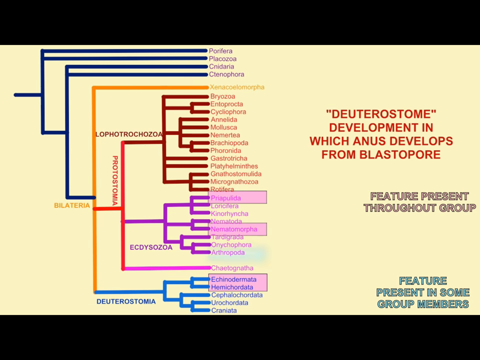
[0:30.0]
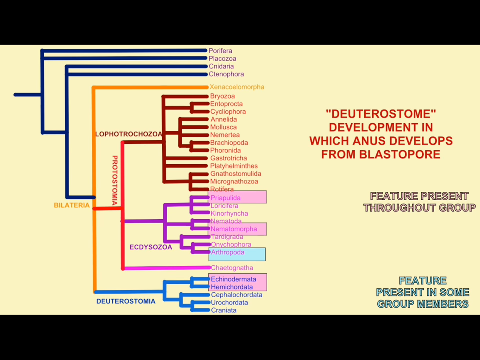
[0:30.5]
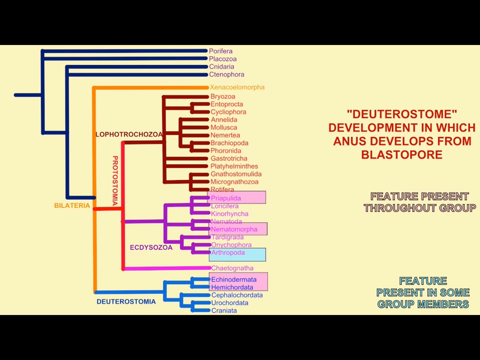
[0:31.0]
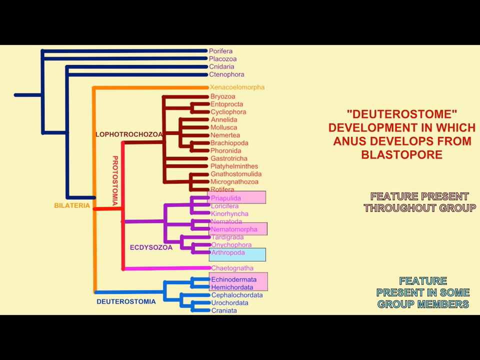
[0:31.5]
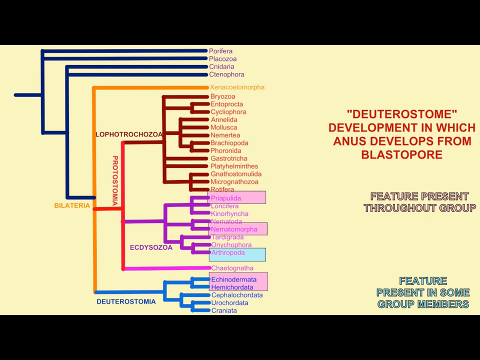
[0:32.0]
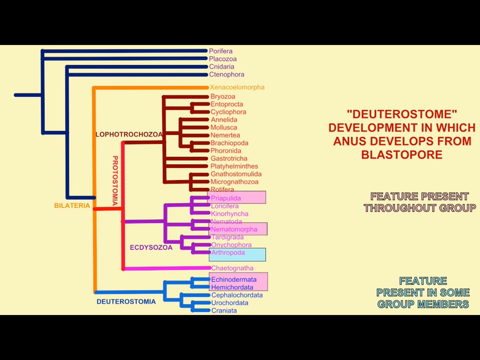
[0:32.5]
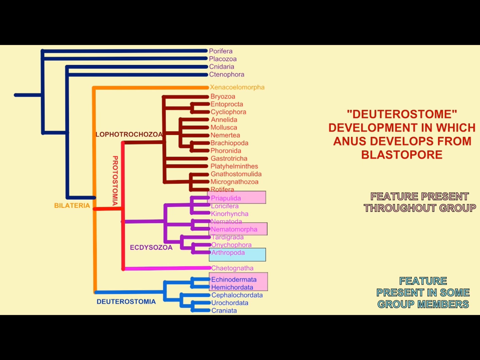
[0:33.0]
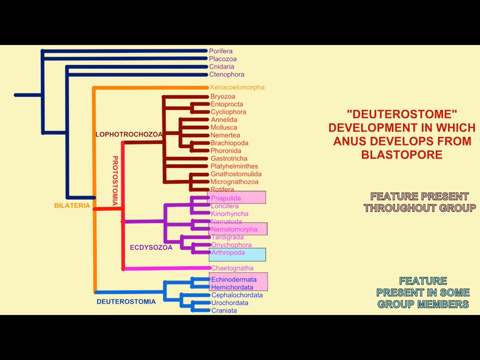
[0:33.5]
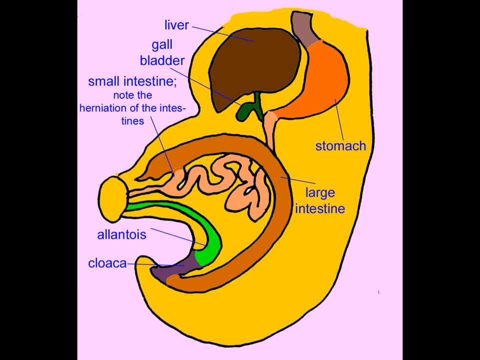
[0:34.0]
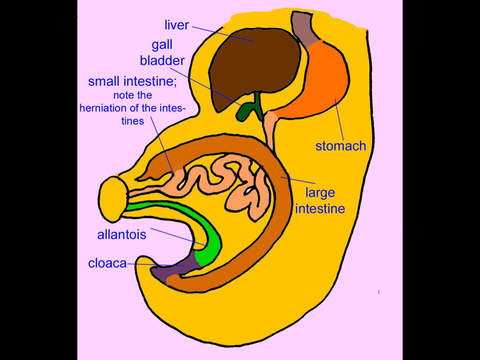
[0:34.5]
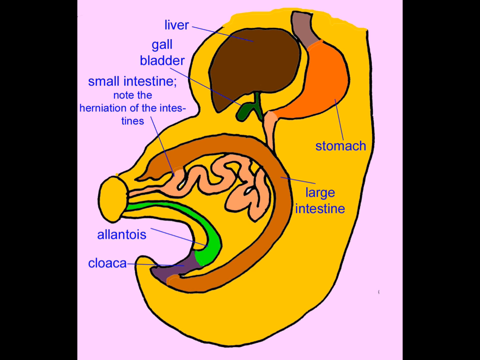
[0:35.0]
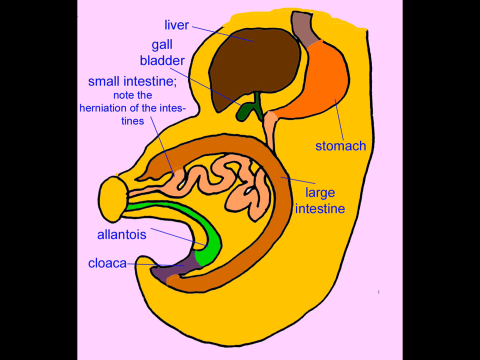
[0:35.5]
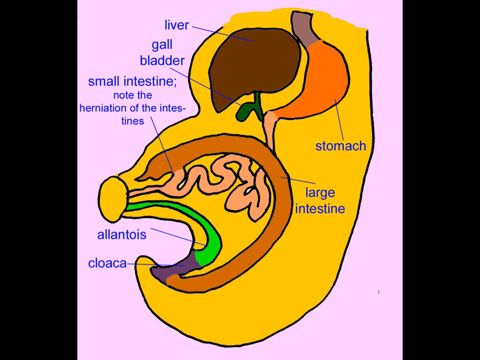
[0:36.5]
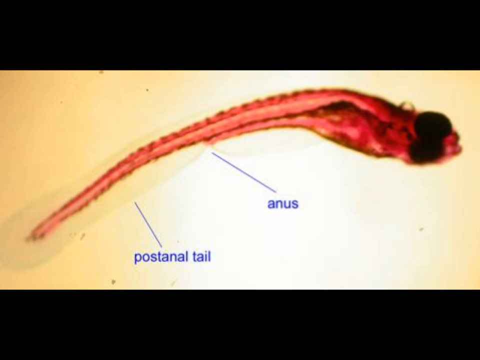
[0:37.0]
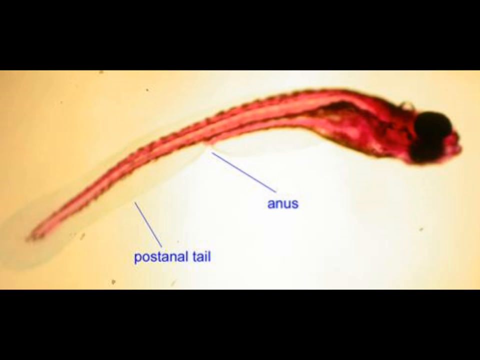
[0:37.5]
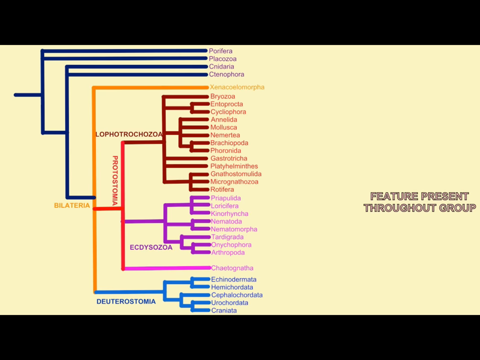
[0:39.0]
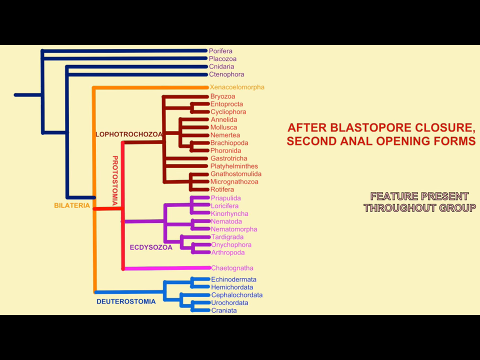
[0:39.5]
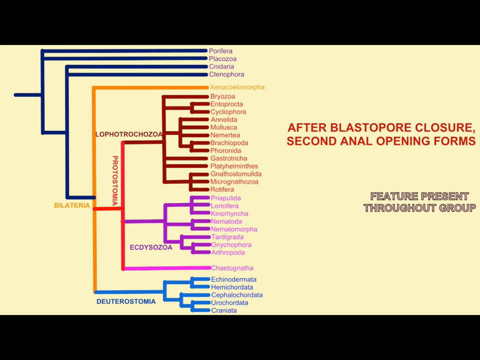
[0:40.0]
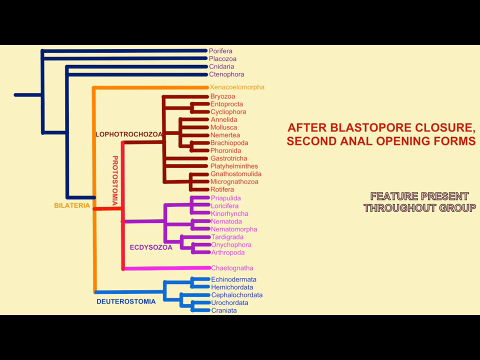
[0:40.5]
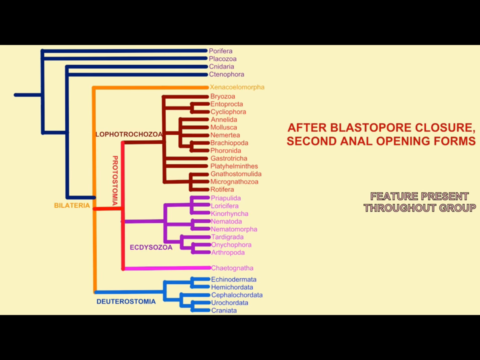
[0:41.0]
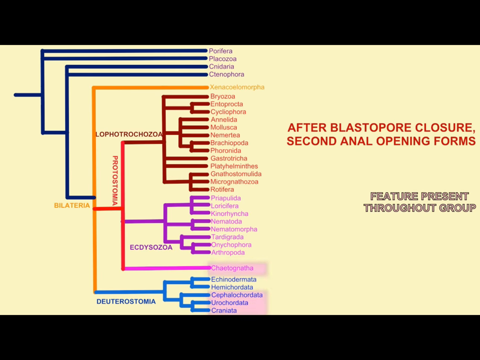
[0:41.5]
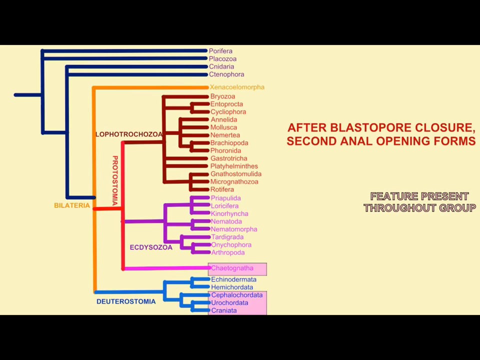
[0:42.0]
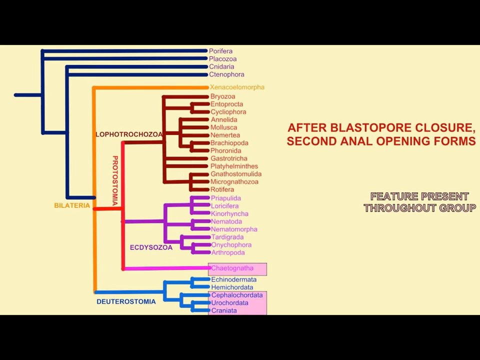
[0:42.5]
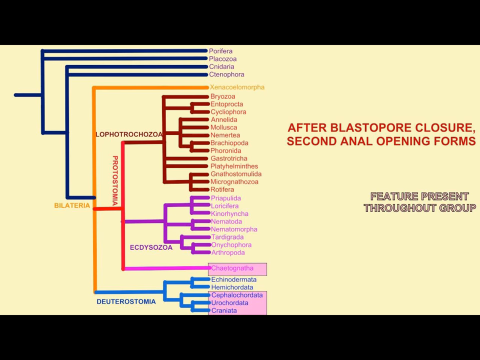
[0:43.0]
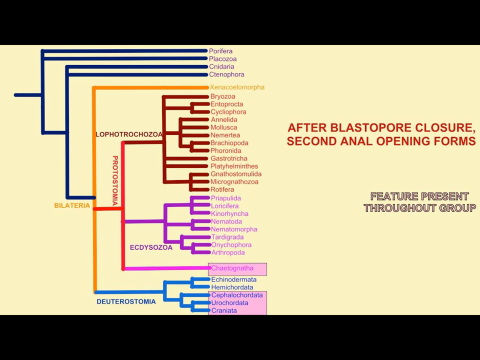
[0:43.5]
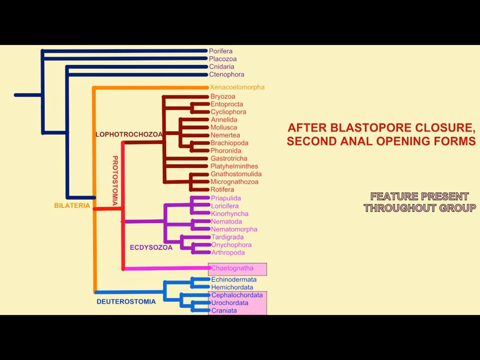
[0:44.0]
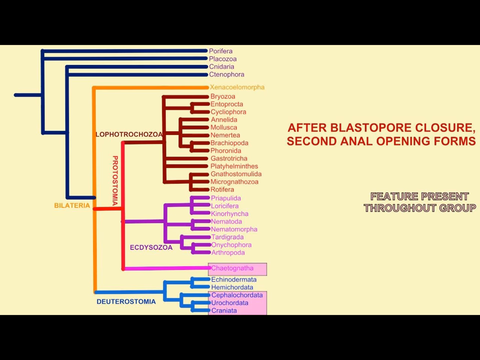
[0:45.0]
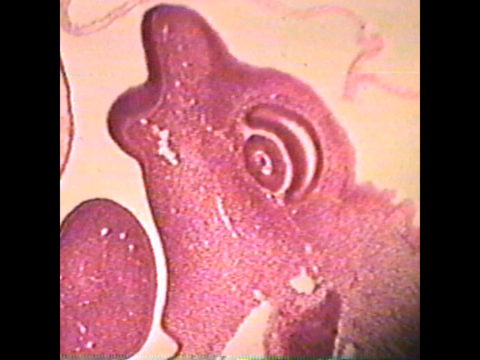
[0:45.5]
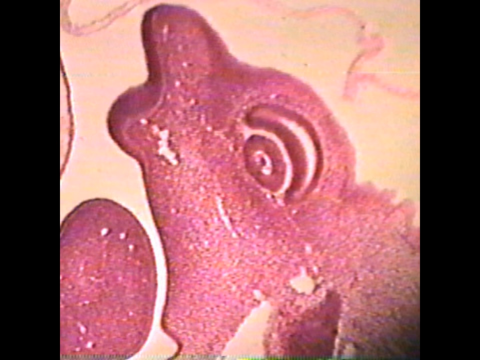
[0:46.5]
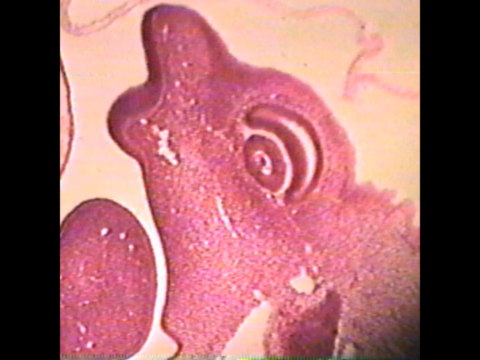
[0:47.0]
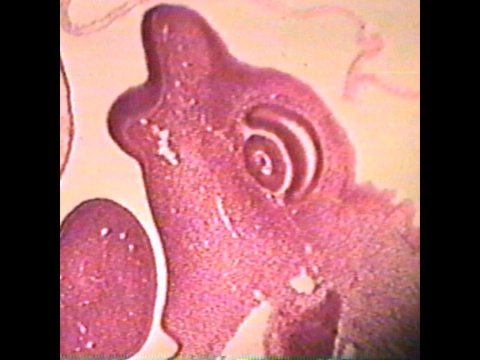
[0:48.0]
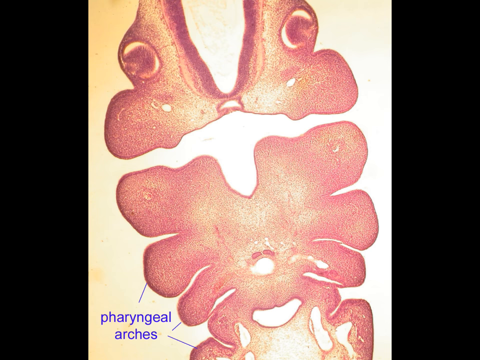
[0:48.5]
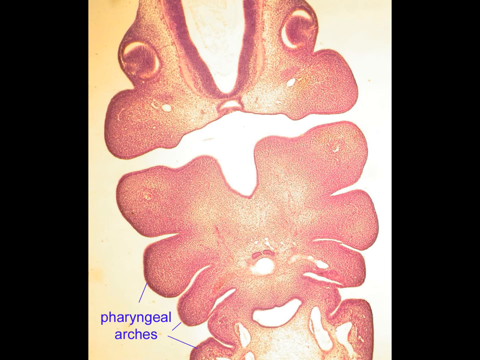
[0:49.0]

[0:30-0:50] A chart on a white background is shown; it looks like a bar chart or something, or kind of like a playoff bracket. The scene switches to a screen with a purple square, apparently showing the inside of a person, at the top left. Blue labels read "liver", below that "gallbladder", below that "small intestine", with "note the herniation of the intestine", and below that "cloaca". On the right side a stomach is shown, labeled "stomach" below it, along with the large intestine, labeled "large intestine" to its right. The stomach is orange and the large intestine is brown. Next is a picture of something that looks like a small insect larva. It is red, with two large black eyes on the top of its head on the right side of the image. It is labeled "anus" in blue letters with a line pointing to the anus, and "post-anal tail" with a line pointing to the post-anal tail, so it is apparently an embryo. The video goes back to the playoff-style chart, with text on the right beginning "after blast", then switches to different close-up images of what looks like an embryo under a microscope.